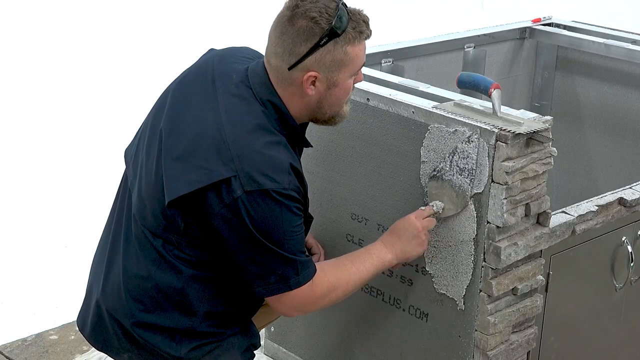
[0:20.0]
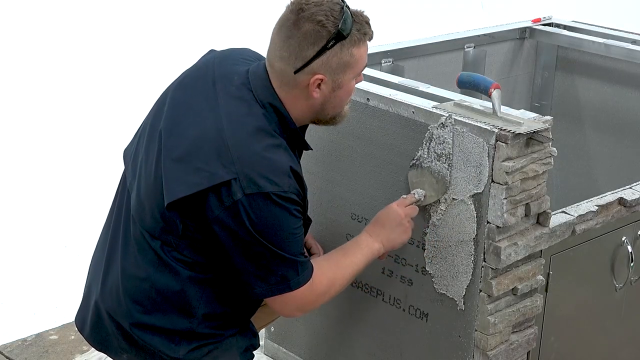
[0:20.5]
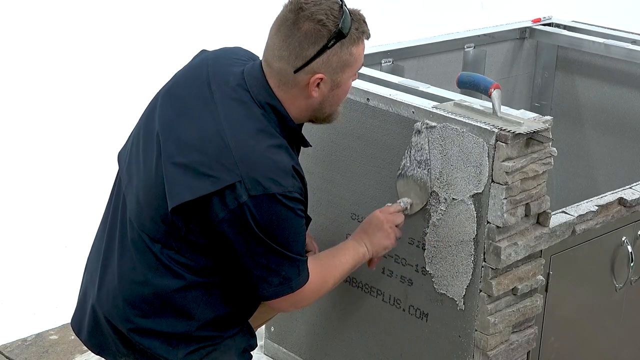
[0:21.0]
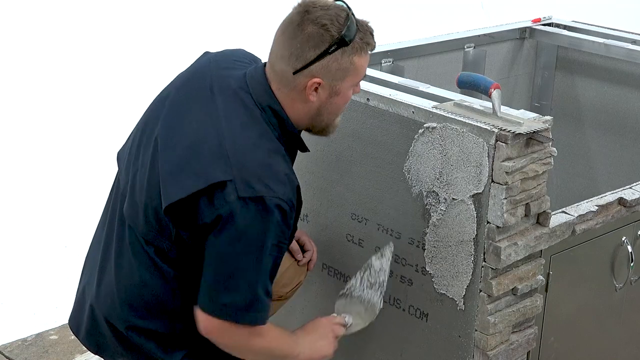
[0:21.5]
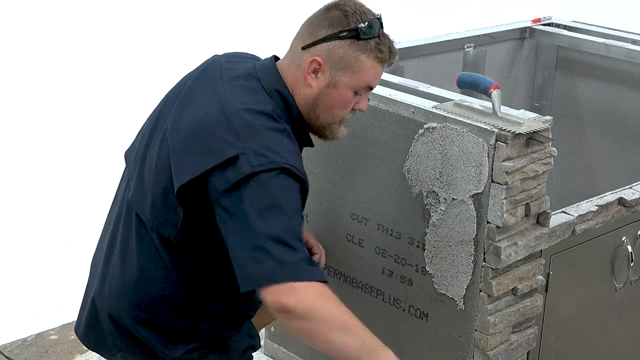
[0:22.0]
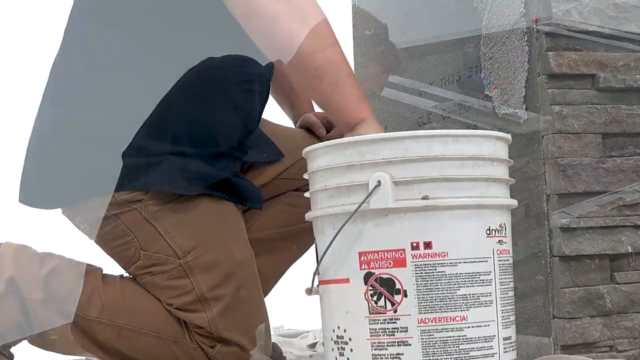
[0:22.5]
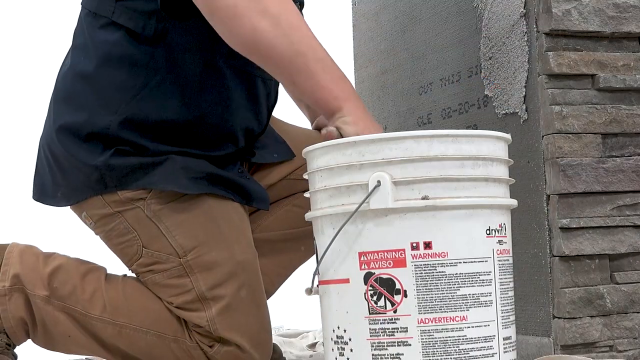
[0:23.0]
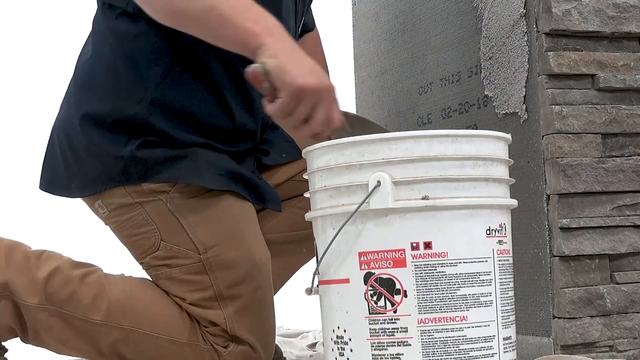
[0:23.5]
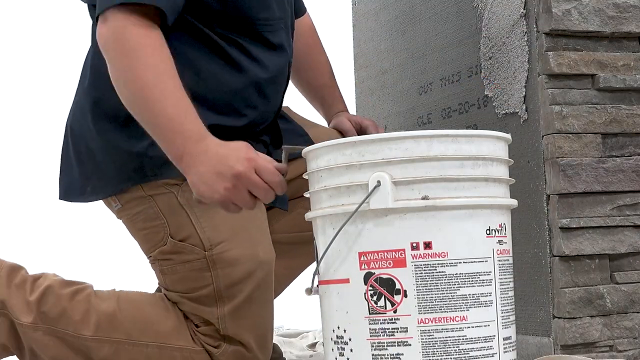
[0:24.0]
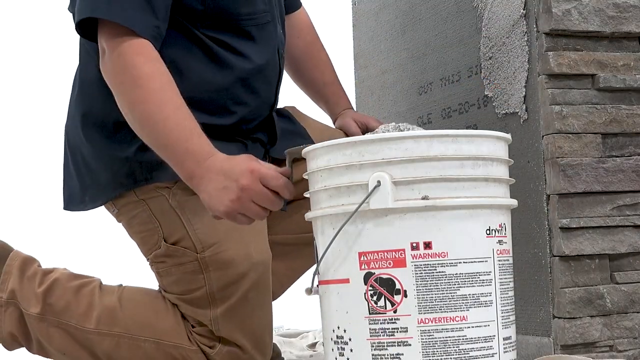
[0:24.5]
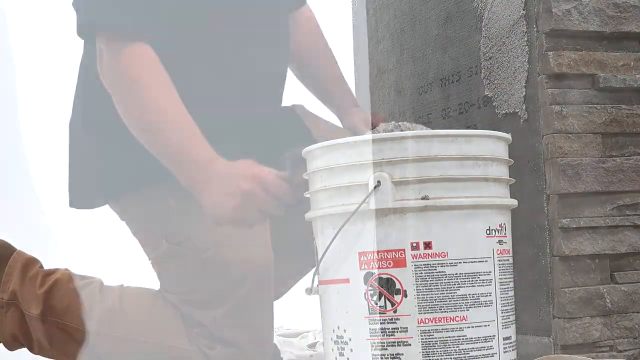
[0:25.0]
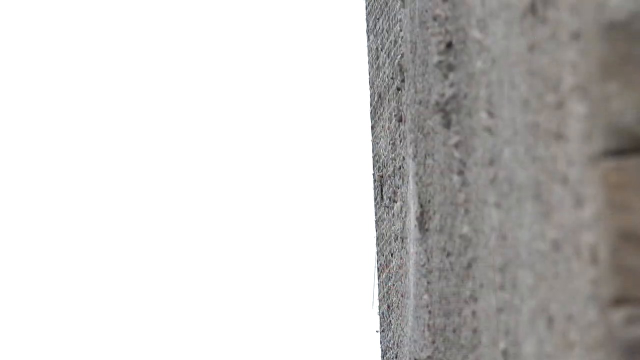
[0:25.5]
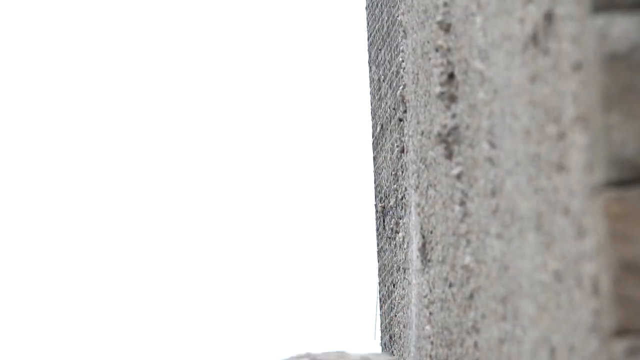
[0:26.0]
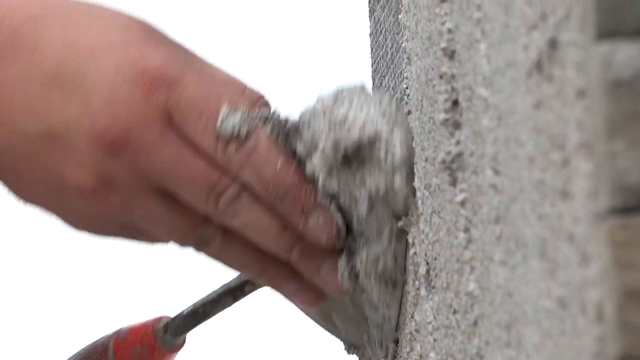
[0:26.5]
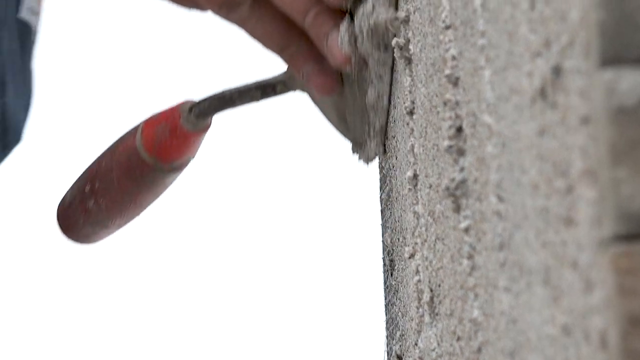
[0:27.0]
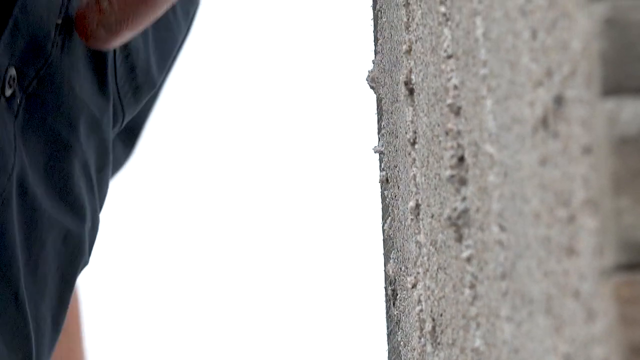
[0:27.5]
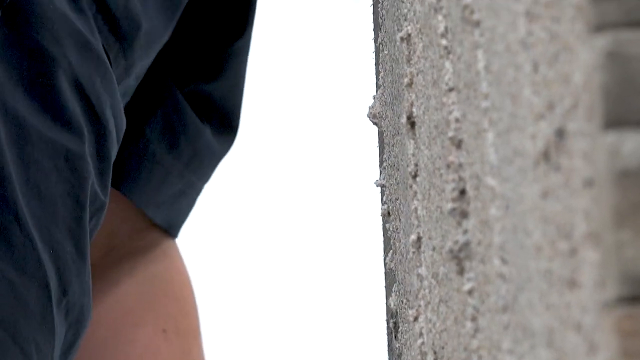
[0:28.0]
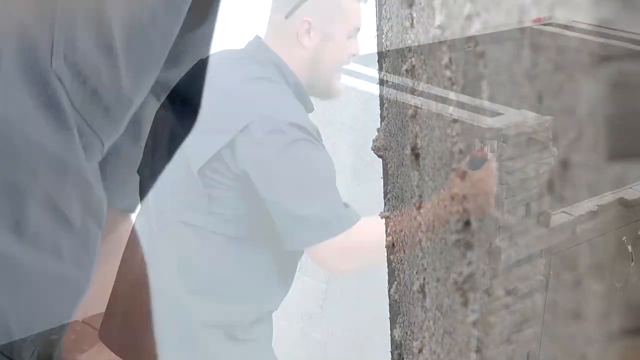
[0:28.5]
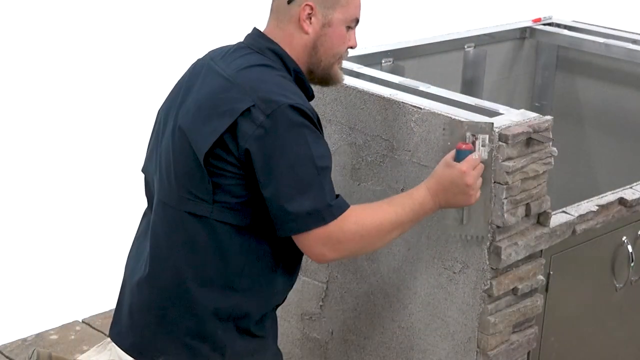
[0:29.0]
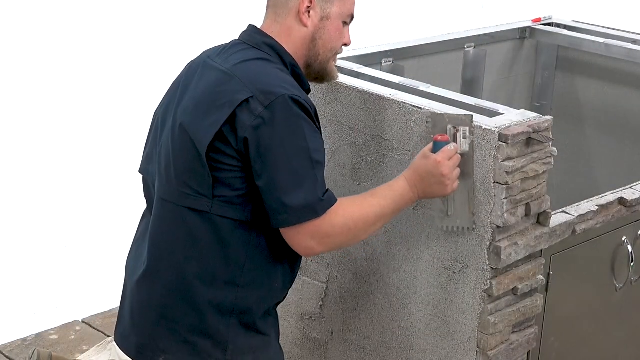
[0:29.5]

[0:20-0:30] A man dips a trowel into concrete in a big white pail and applies it to the side of a barbecue. He has sunglasses on his head, short-cropped hair and a goatee, and wears a blue shirt with what looks like a flap in the back near the right shoulder. Only his right hand and the right side of his face are visible. He smooths out the concrete with the trowel, goes back for more, kind of shakes the trowel over the white pail, and then smooths it across, leaving a very smooth finish. Another instrument with a blue handle is on the top.